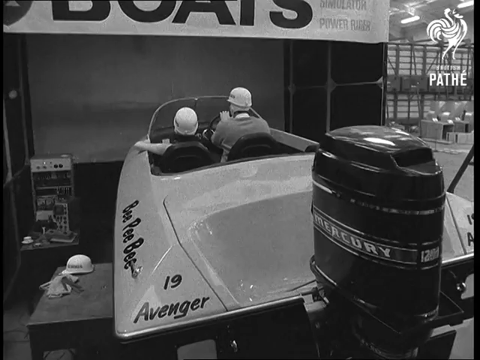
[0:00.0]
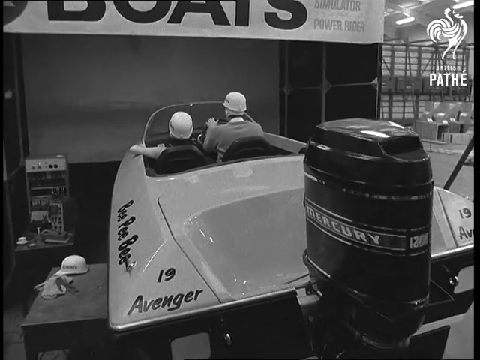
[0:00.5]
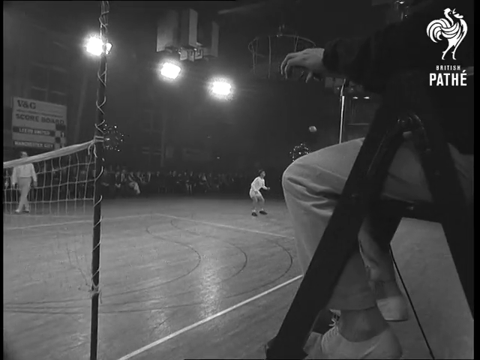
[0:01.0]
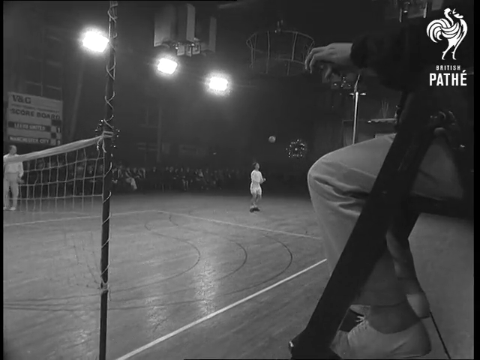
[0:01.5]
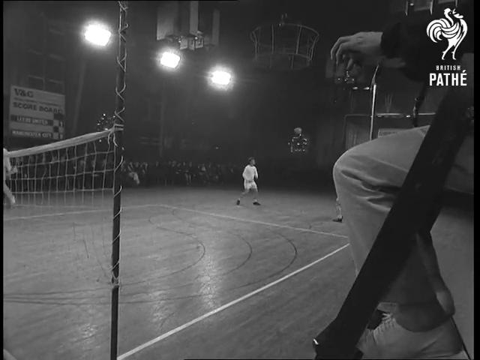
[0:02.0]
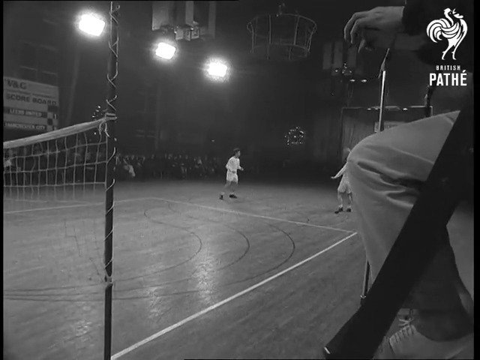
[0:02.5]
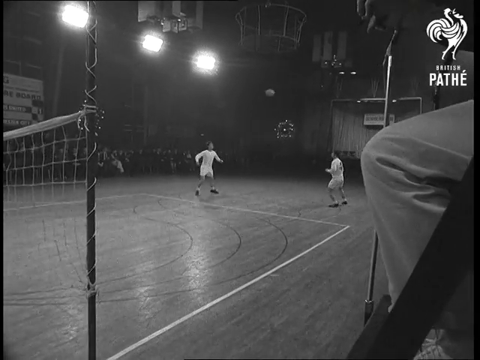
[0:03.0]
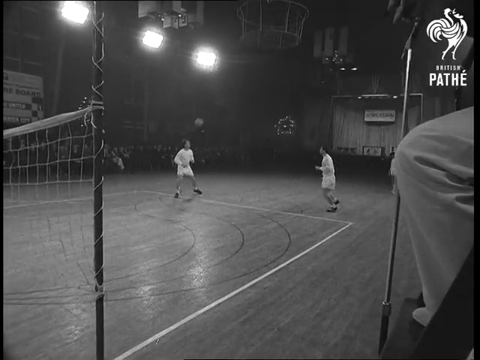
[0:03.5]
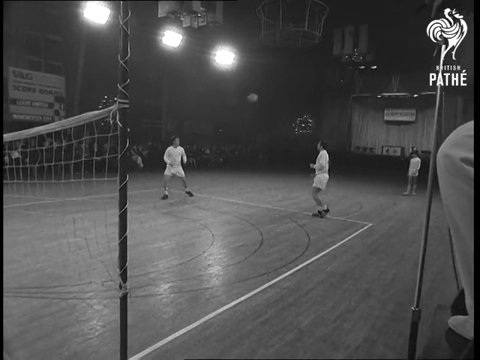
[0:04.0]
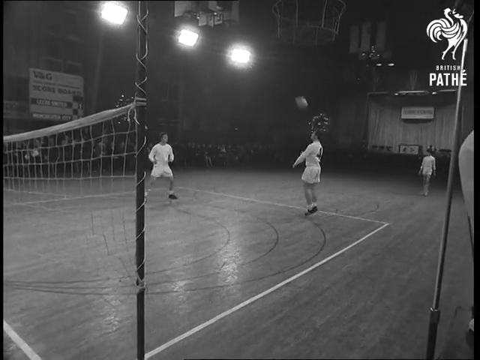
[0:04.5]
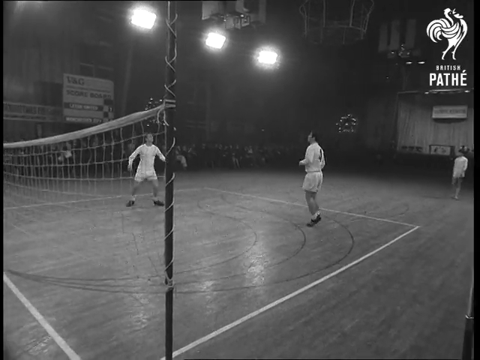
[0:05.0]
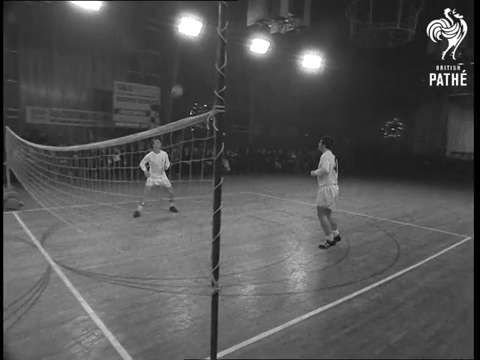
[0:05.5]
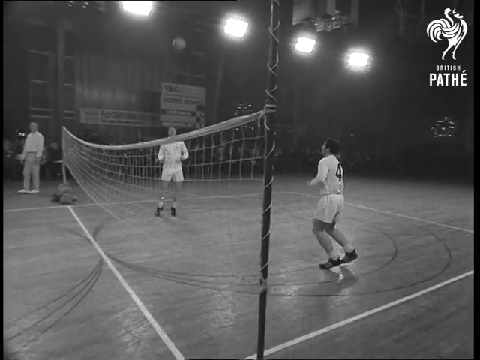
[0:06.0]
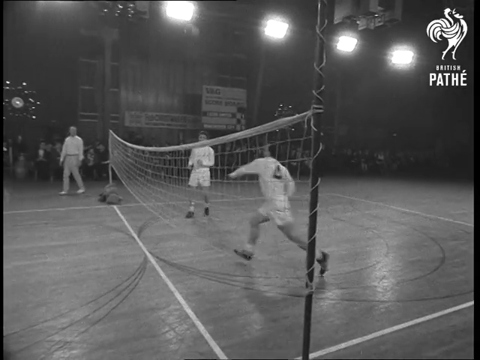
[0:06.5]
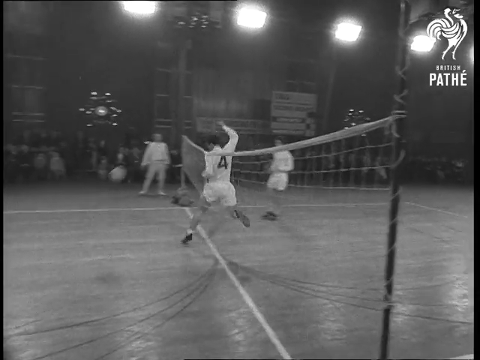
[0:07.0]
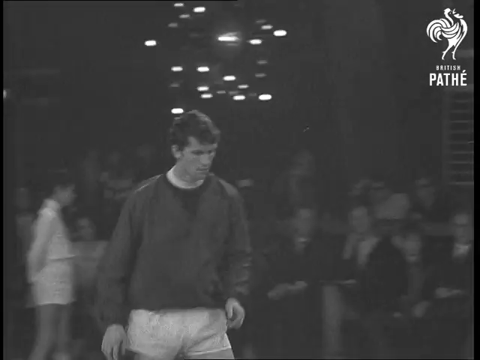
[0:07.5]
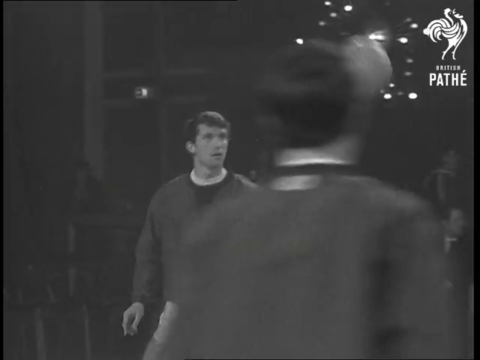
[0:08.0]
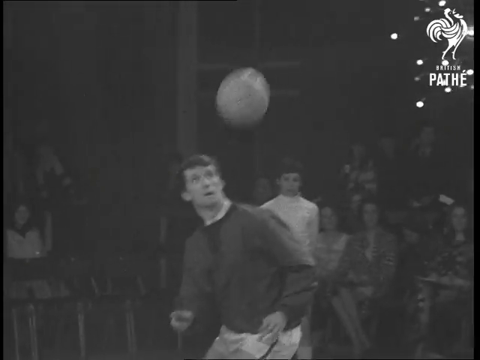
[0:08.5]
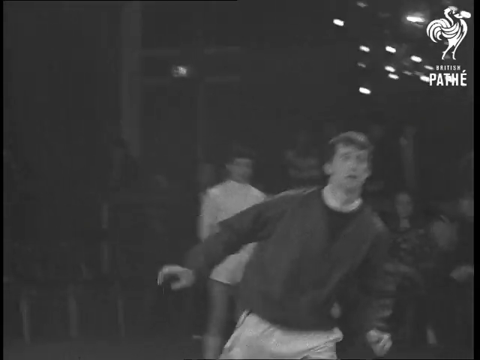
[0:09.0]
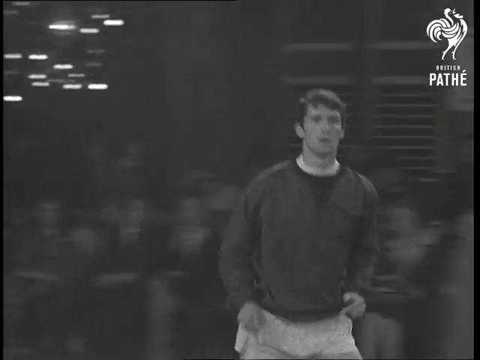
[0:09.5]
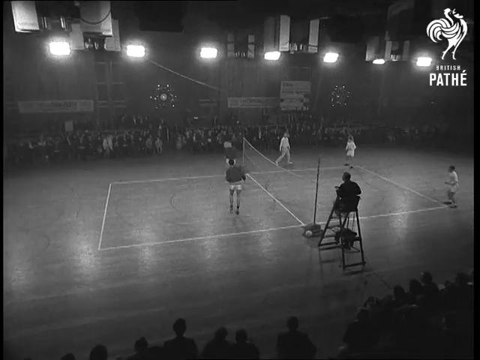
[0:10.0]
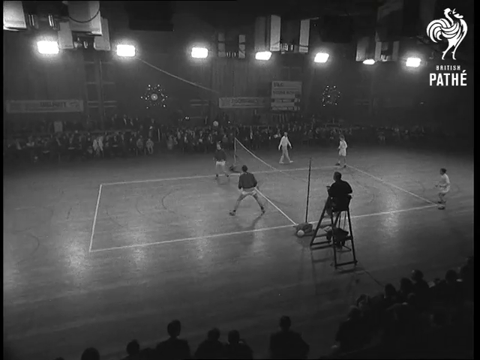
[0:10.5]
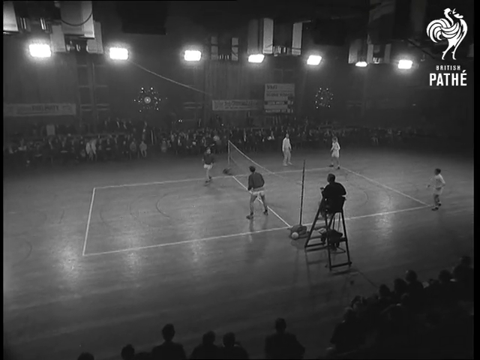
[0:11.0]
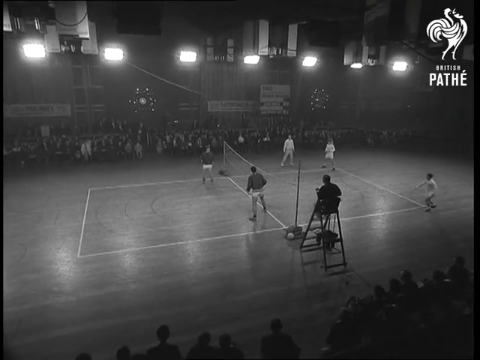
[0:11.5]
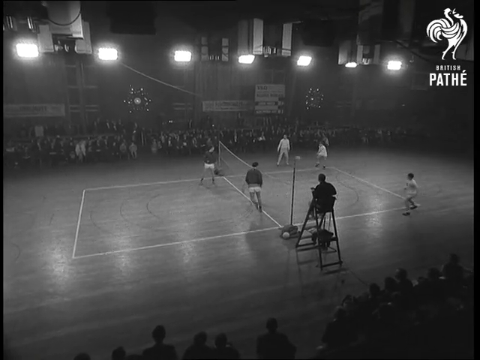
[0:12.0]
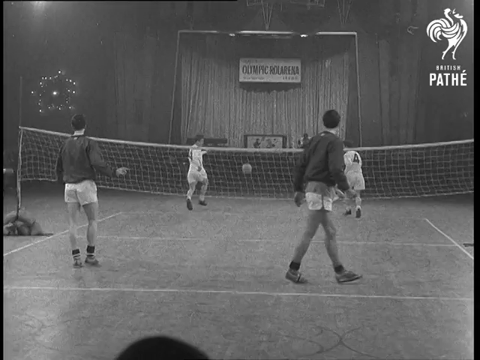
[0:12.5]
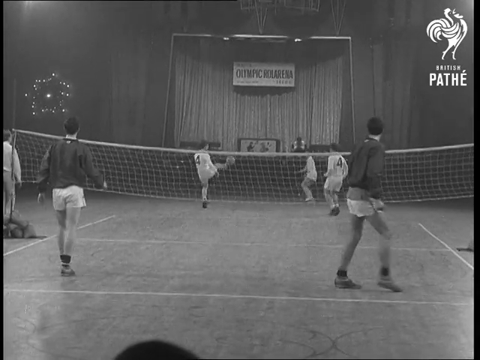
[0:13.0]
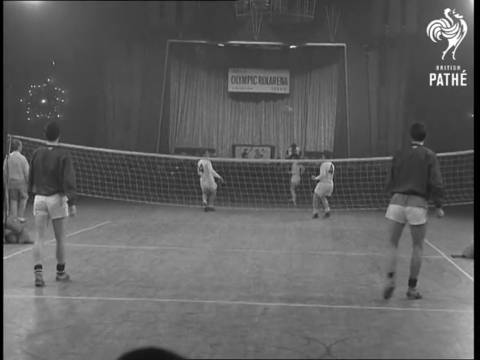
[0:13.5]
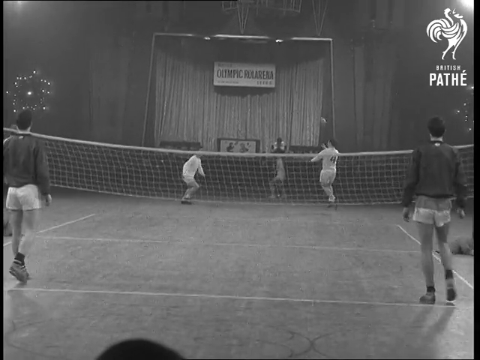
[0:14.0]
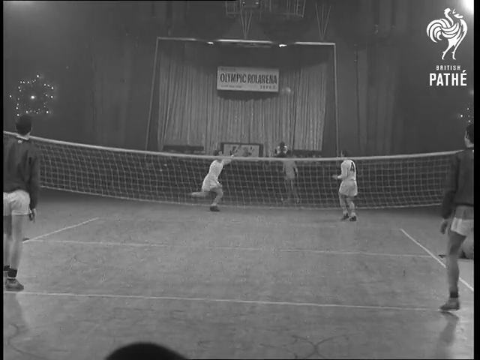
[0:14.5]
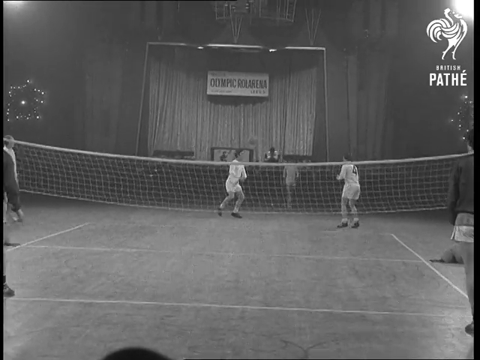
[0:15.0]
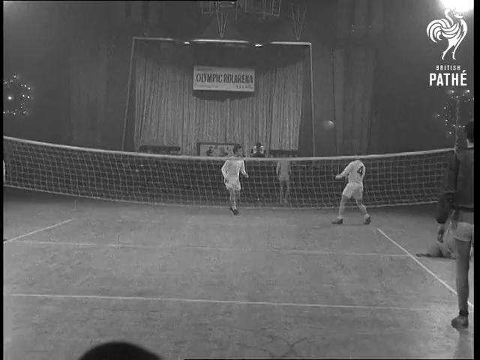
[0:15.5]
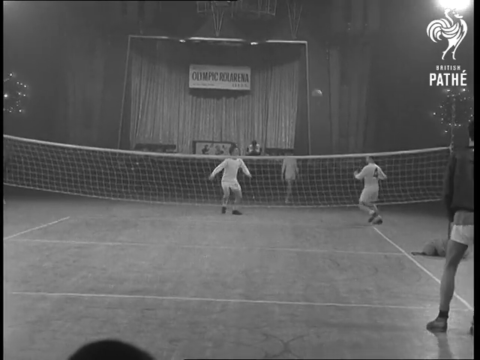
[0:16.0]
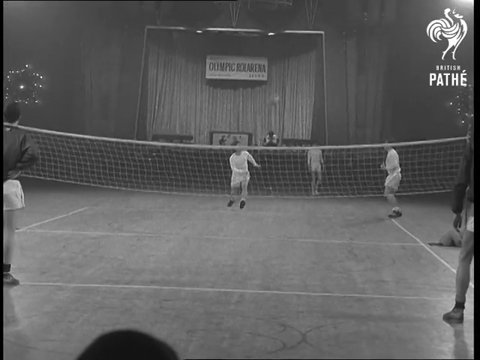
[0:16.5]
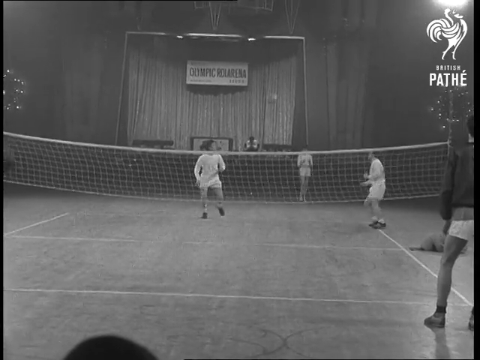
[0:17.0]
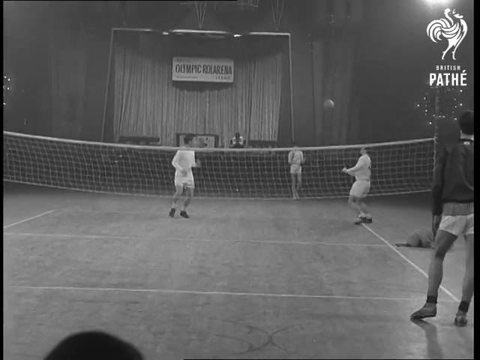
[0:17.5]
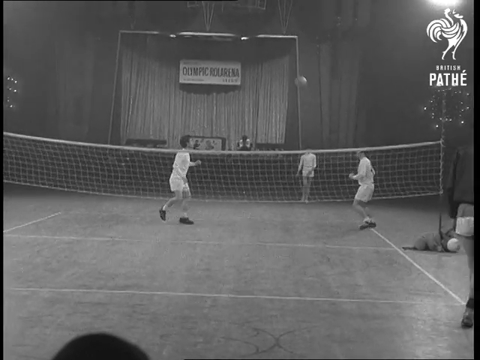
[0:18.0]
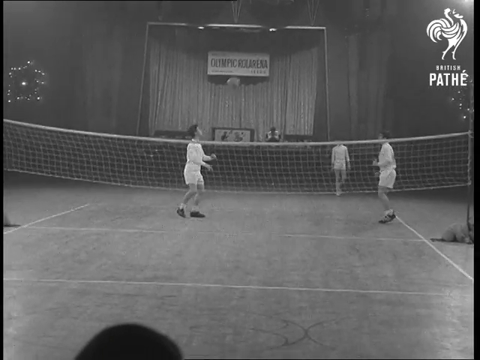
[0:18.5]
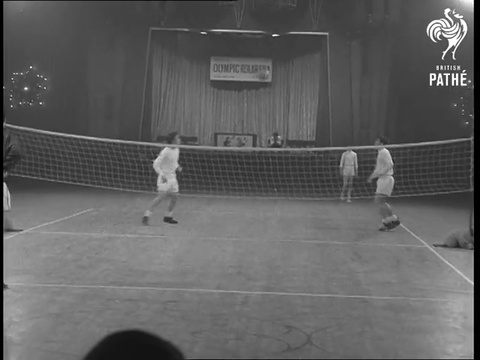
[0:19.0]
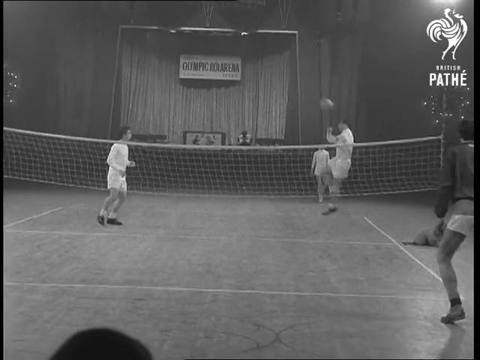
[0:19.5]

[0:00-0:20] A black and white picture shows some boats, apparently for sale, possibly inside a warehouse. One boat has a Mercury motor on the back and reads "BPB" and "19 Avenger." Next, a game kind of like volleyball is going on in a warehouse or gym, with men in uniforms hitting the ball a lot with their heads. They also kick the ball, but they mainly use only their heads to bop it over to the other side. At the top of the screen there is a big rooster done in white, along with the word "PATHE." People are watching the game, and the court has different circles in the middle that go outwards. There are three people on the white team and three people on the left team.